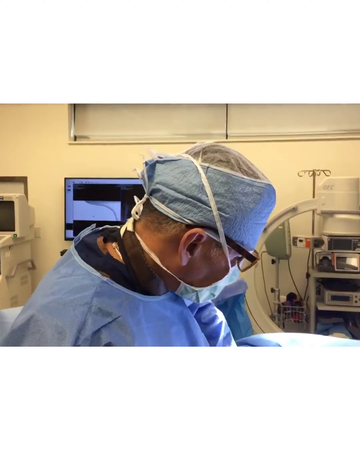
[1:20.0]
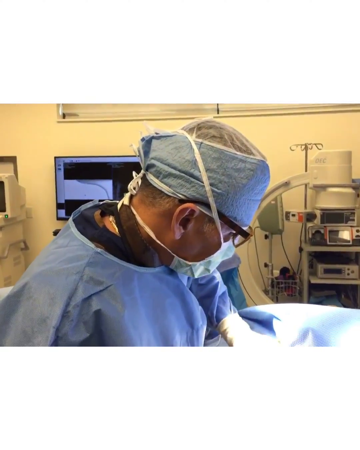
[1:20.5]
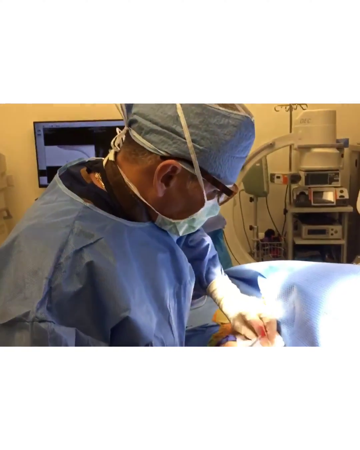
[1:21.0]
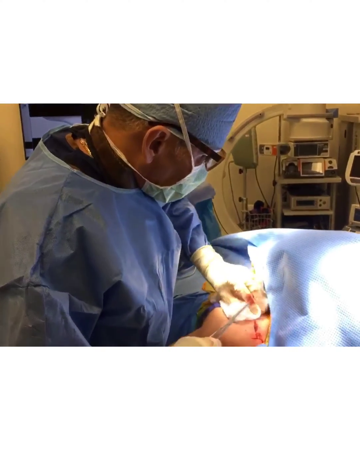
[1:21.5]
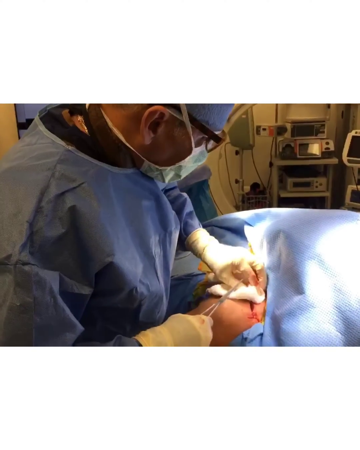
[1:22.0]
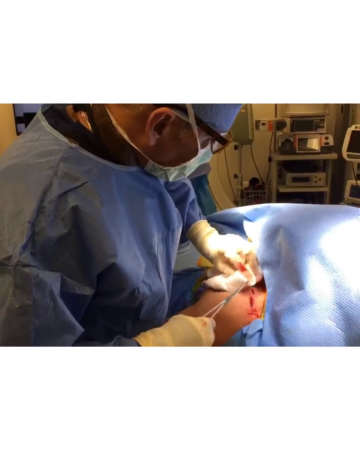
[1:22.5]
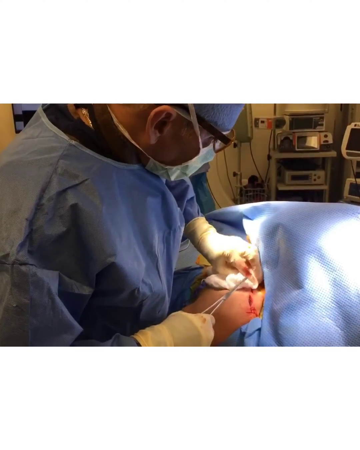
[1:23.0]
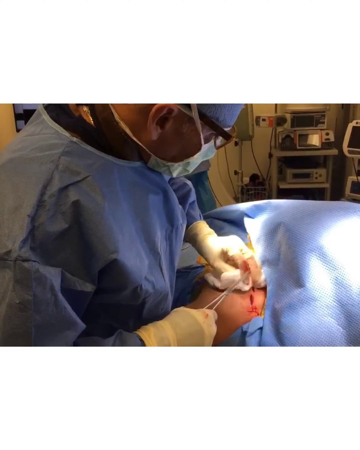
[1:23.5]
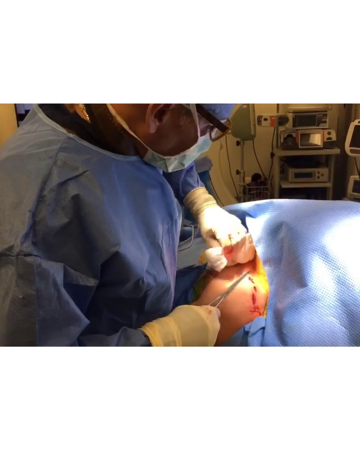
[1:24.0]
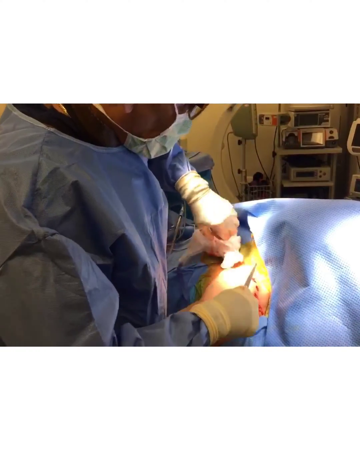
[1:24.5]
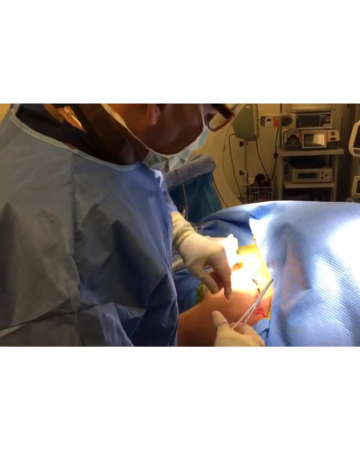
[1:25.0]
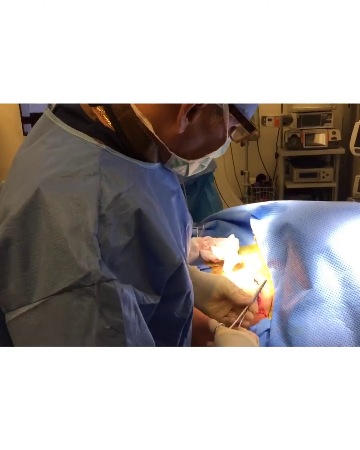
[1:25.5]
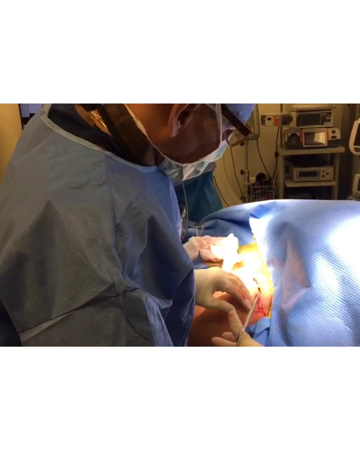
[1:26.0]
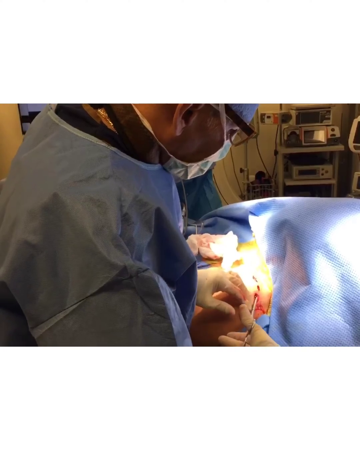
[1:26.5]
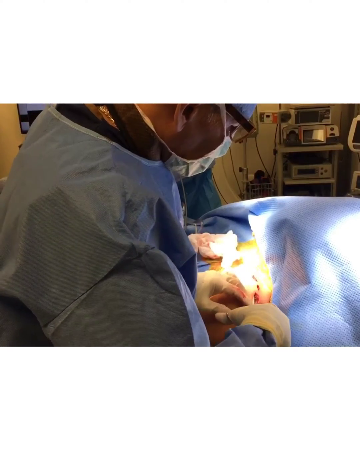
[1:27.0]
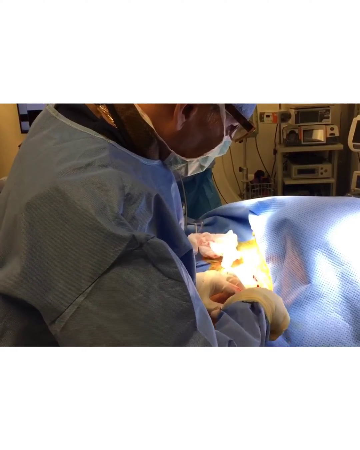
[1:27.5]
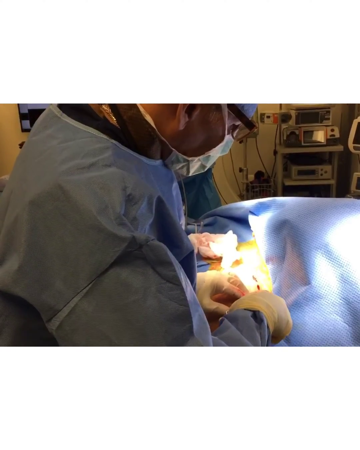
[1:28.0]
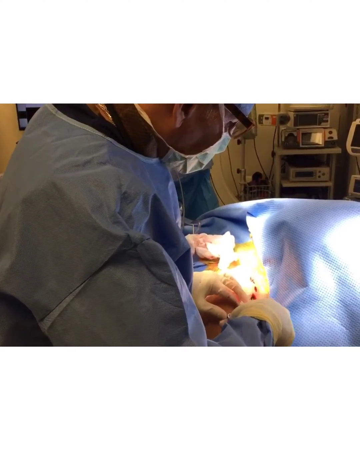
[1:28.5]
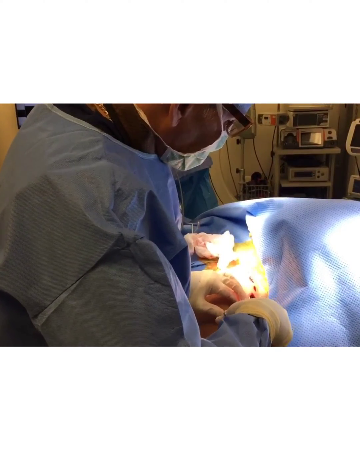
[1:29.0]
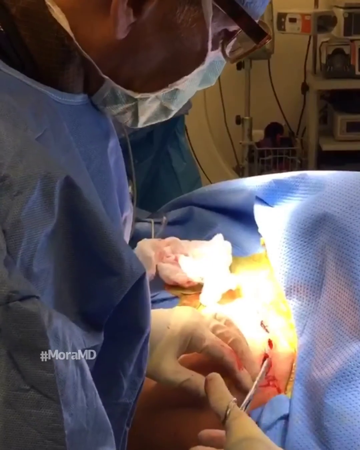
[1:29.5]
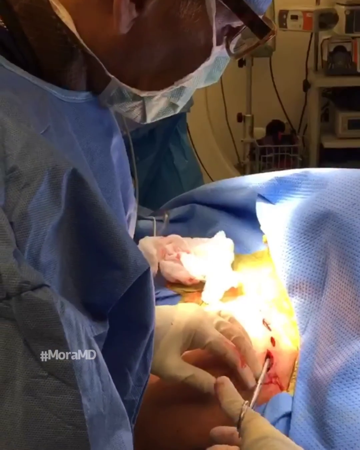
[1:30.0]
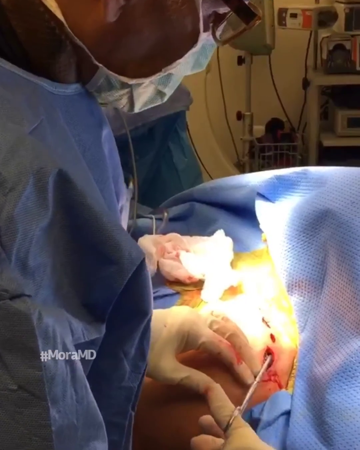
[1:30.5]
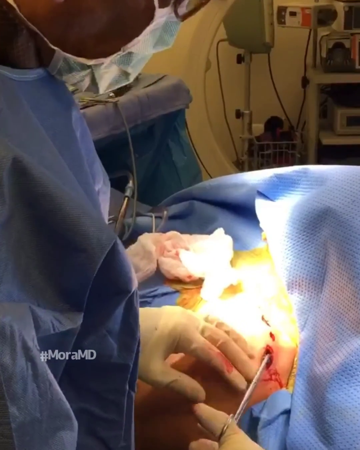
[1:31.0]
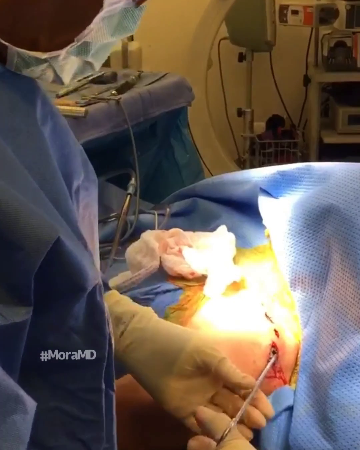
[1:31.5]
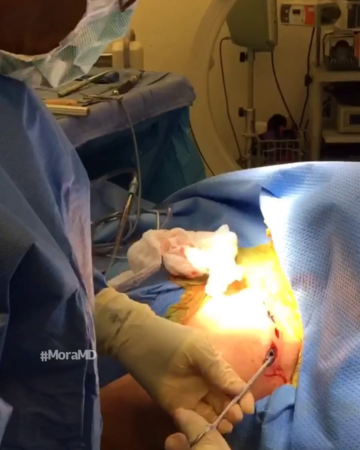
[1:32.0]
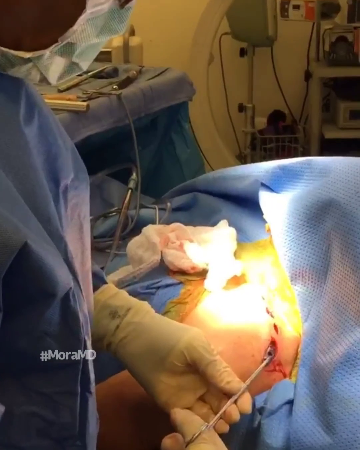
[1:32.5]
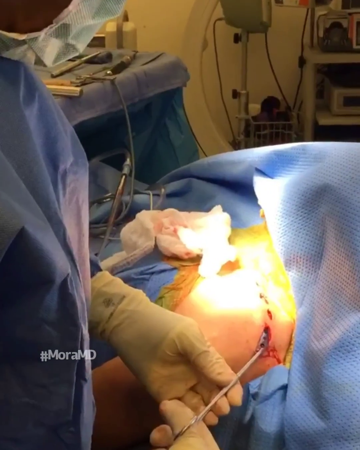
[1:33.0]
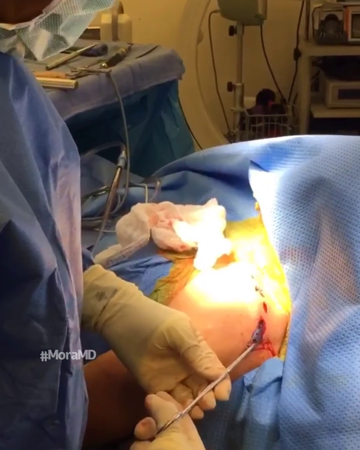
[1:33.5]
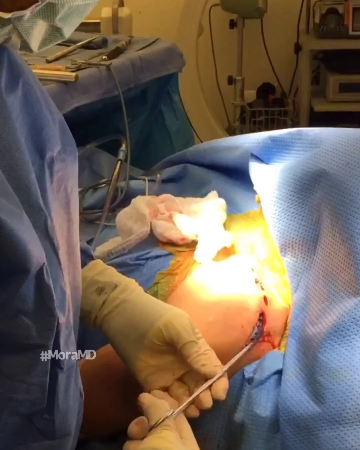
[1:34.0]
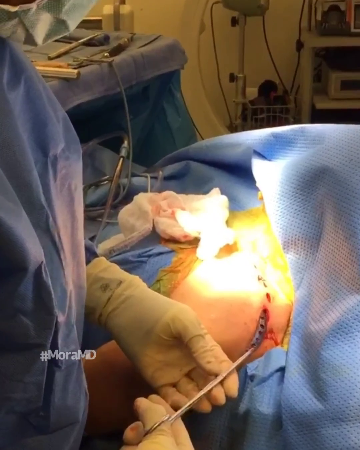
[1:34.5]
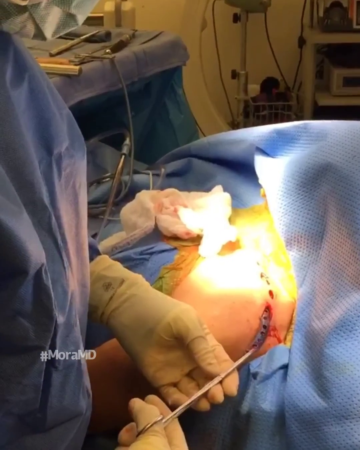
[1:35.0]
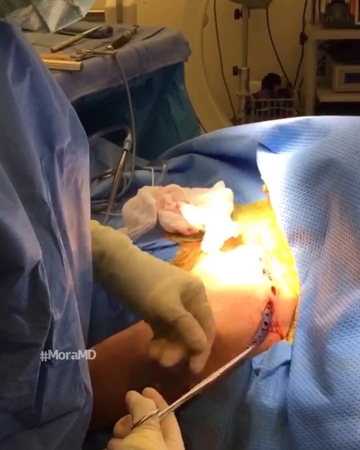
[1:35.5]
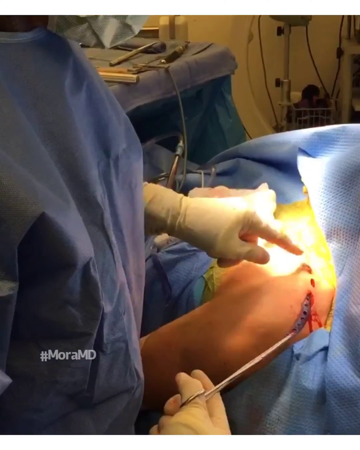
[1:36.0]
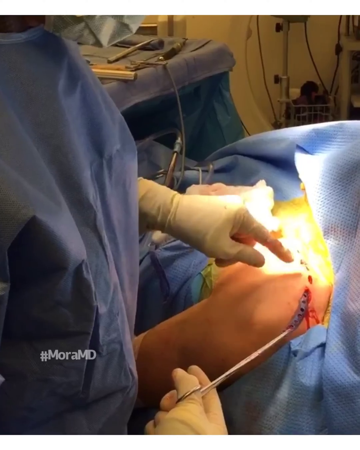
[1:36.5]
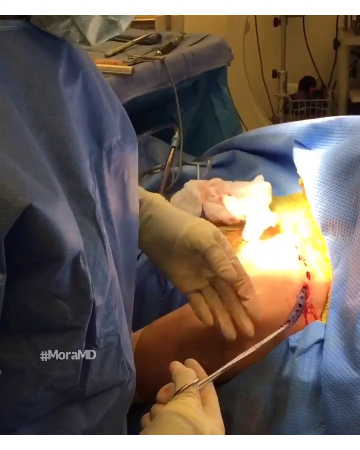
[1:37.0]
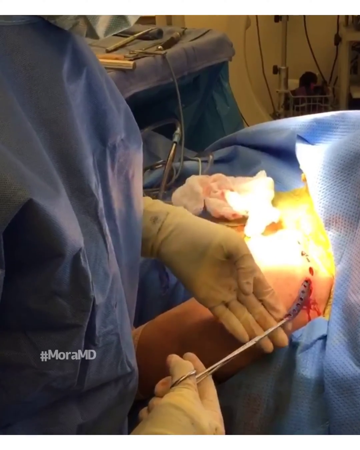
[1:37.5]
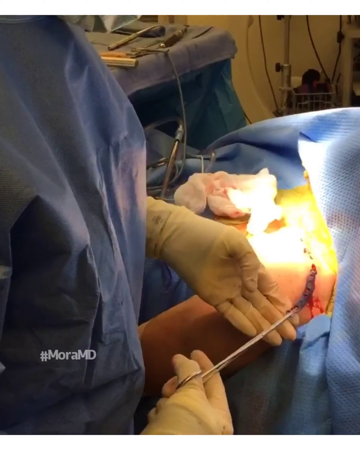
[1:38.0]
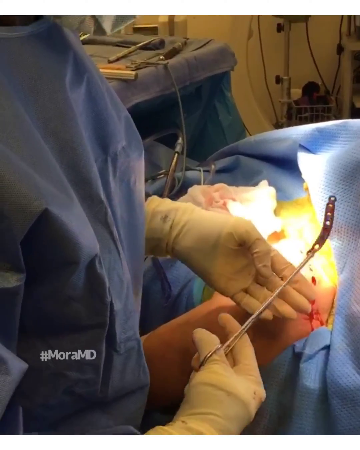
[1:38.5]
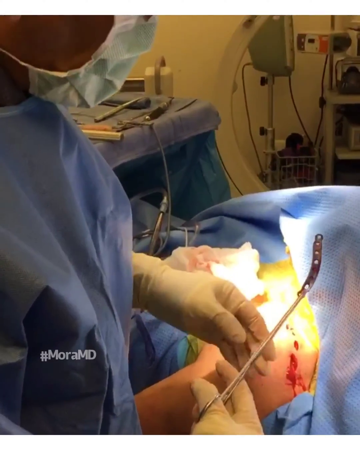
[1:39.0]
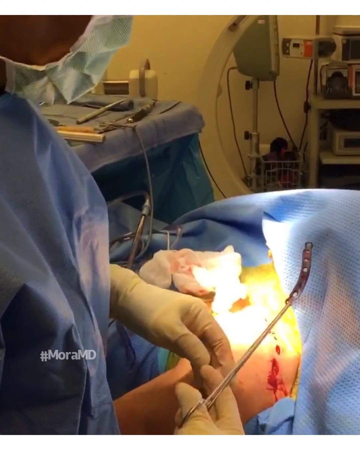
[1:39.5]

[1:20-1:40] In the surgery area, the doctor uses gauze in his left hand to wipe the patient's skin, which has surgical cuts. He uses the scissor-like tool to reach into one of the cuts and pulls out a metal device, the metal plate; some blood comes out with it and rolls down the patient's skin. The doctor talks to the camera and points at something on the body with his left hand. He holds up the metal device for the camera; it is a little curved and has five visible holes. Multiple pieces of equipment are in the room, including a device for holding medicine and saline solution and various computer devices. A screen in the shot of the doctor appears to show what the camera closest to the patient might be capturing.